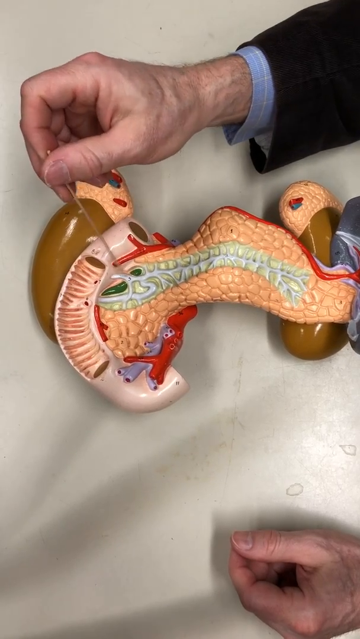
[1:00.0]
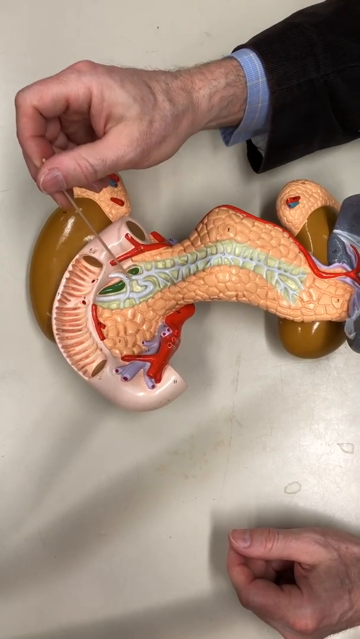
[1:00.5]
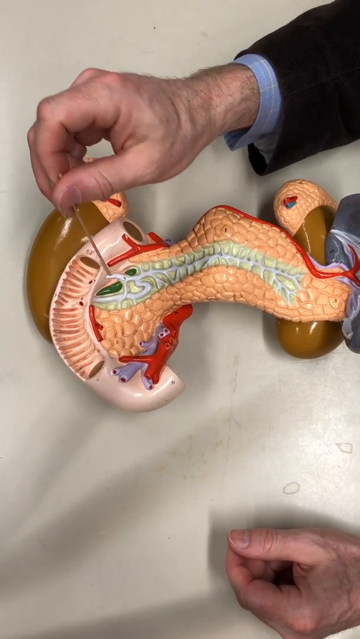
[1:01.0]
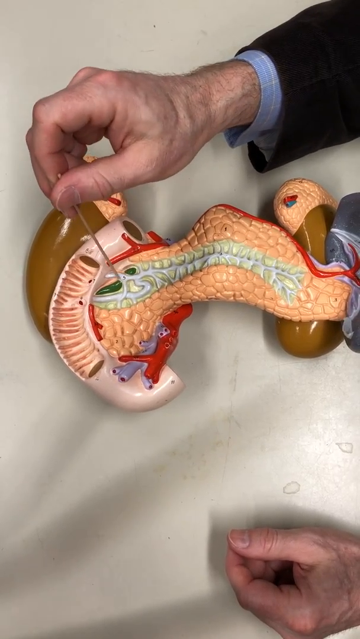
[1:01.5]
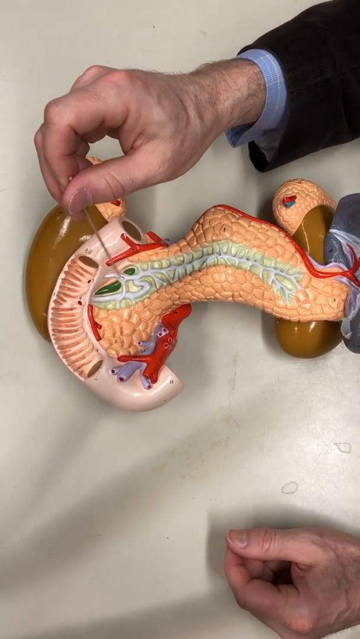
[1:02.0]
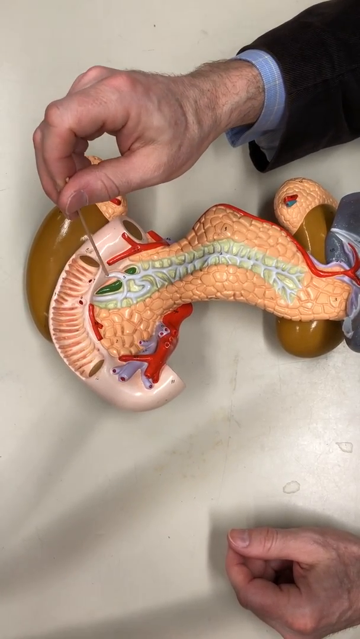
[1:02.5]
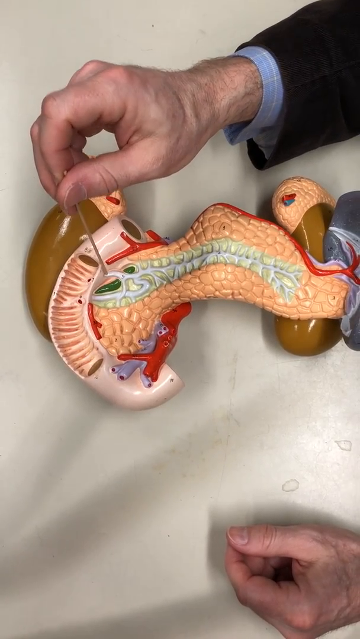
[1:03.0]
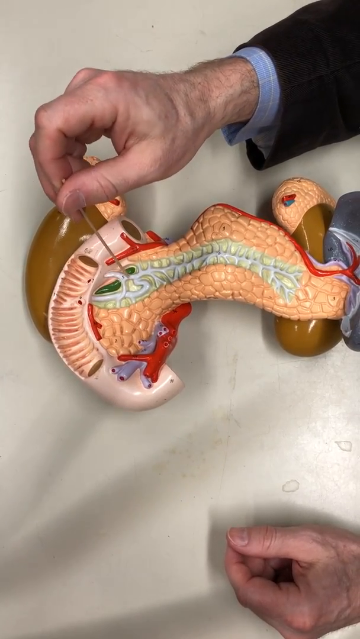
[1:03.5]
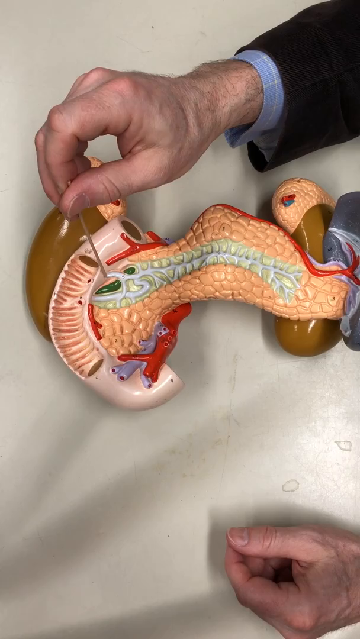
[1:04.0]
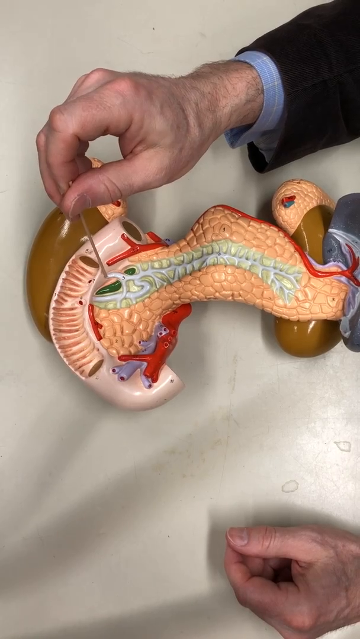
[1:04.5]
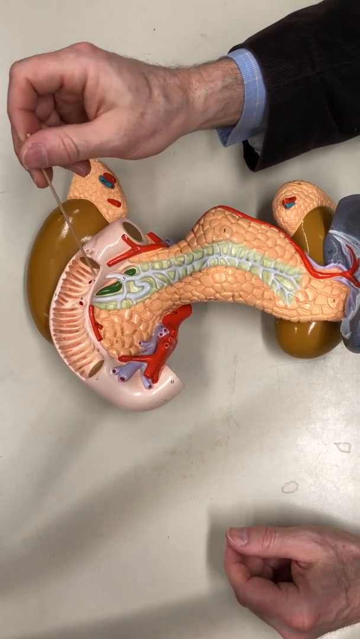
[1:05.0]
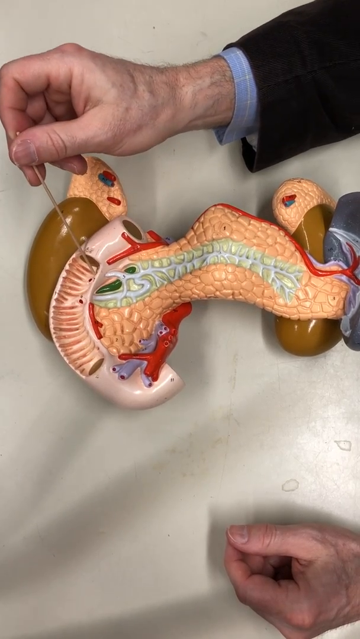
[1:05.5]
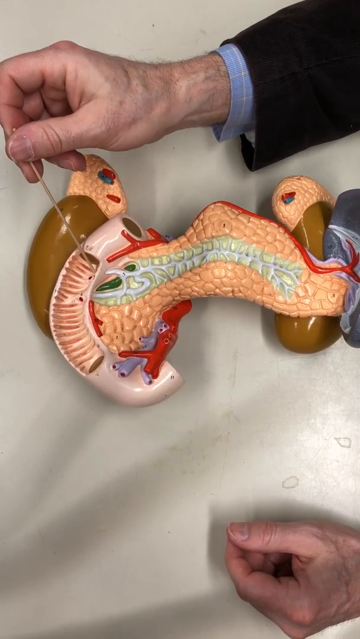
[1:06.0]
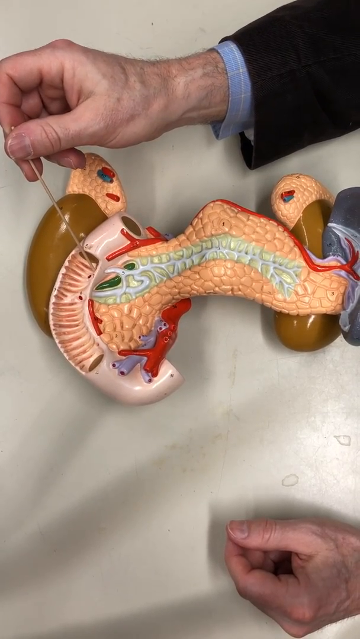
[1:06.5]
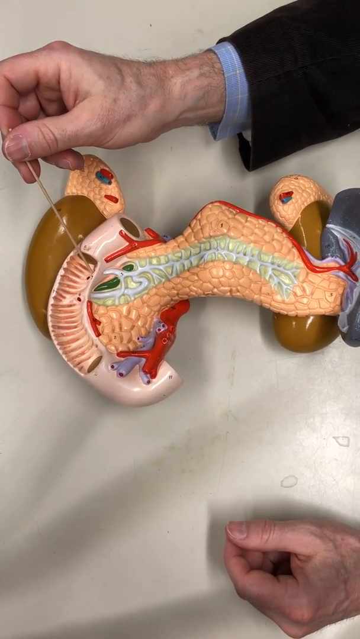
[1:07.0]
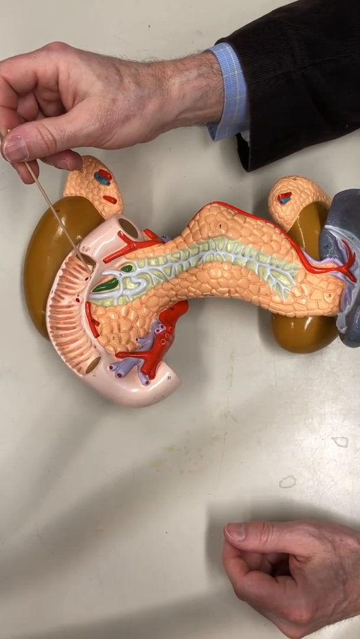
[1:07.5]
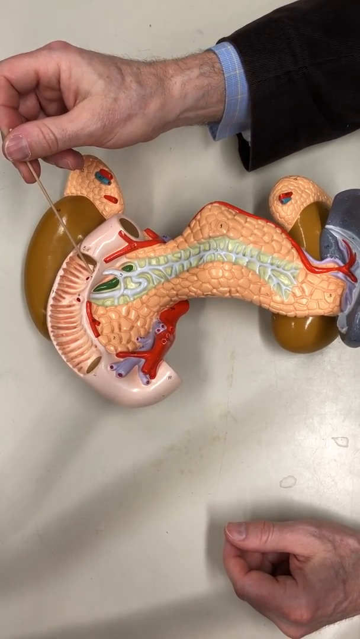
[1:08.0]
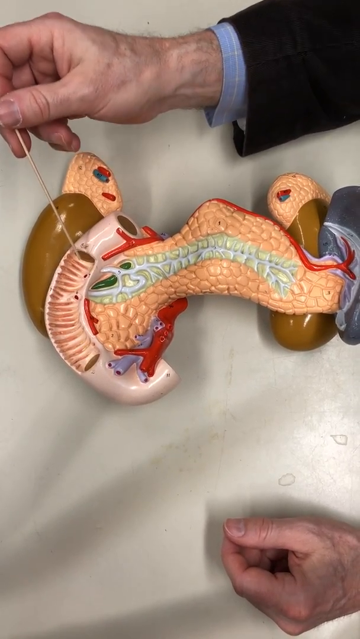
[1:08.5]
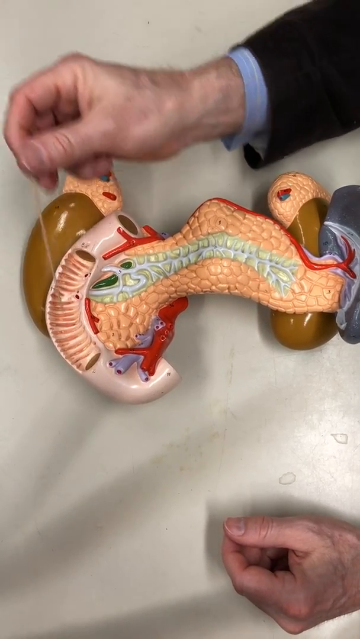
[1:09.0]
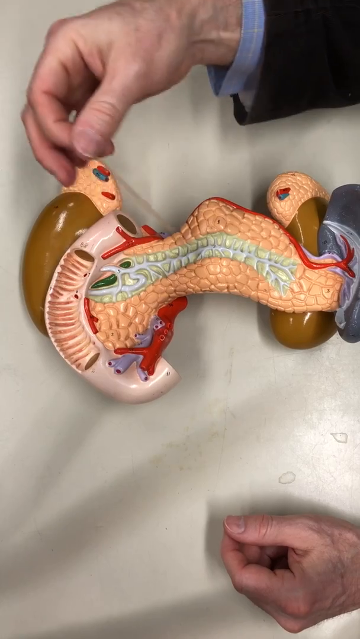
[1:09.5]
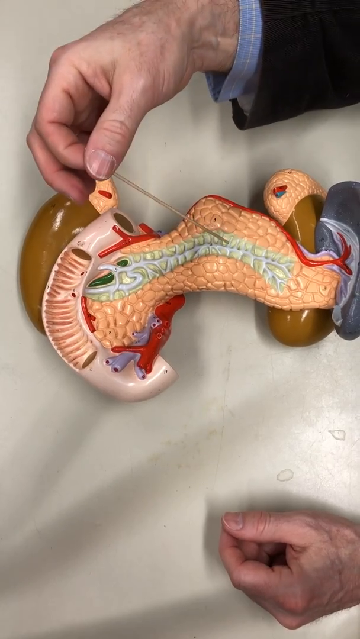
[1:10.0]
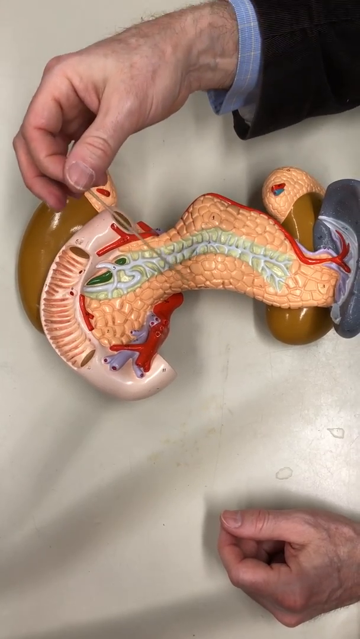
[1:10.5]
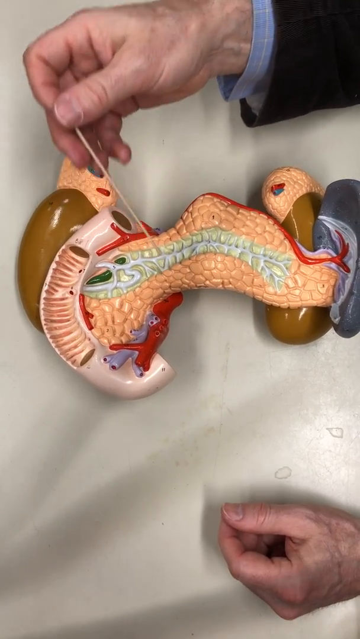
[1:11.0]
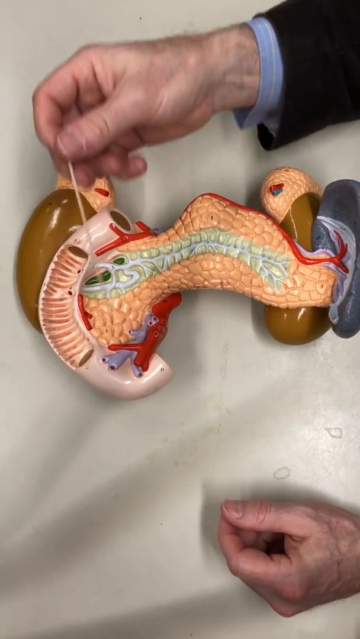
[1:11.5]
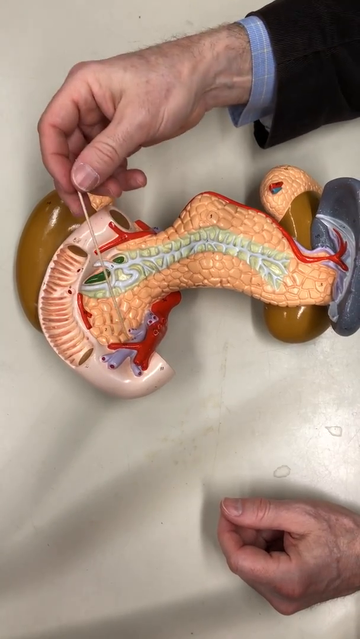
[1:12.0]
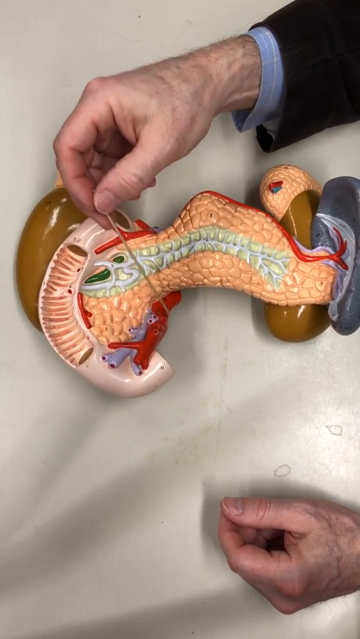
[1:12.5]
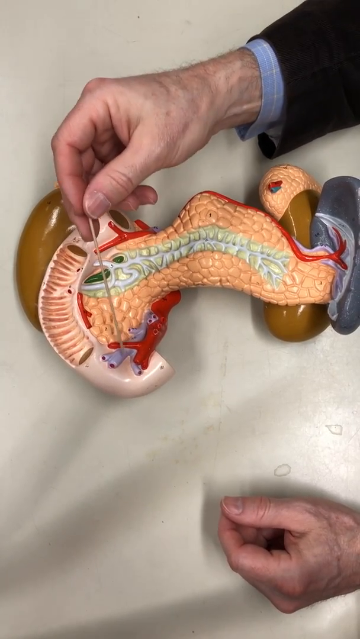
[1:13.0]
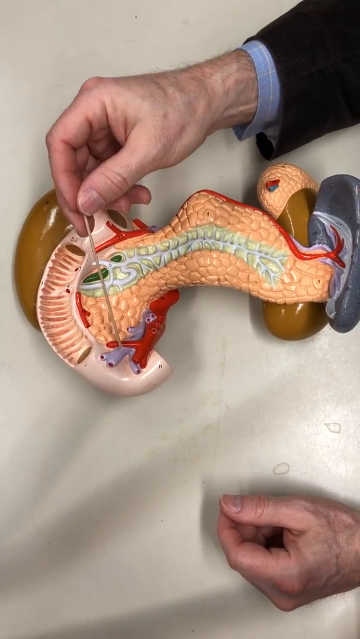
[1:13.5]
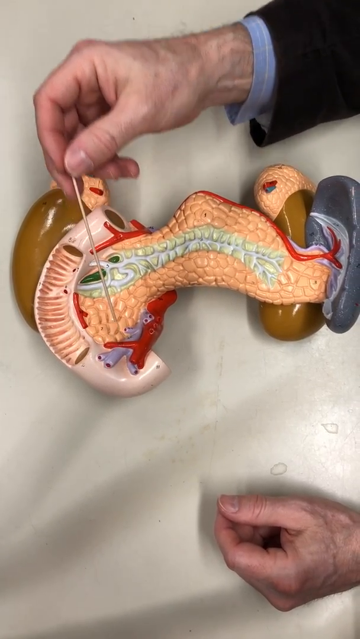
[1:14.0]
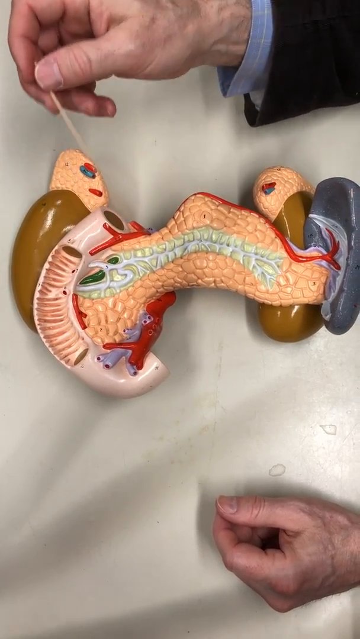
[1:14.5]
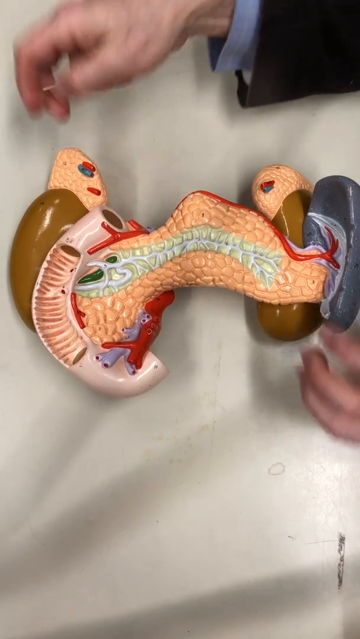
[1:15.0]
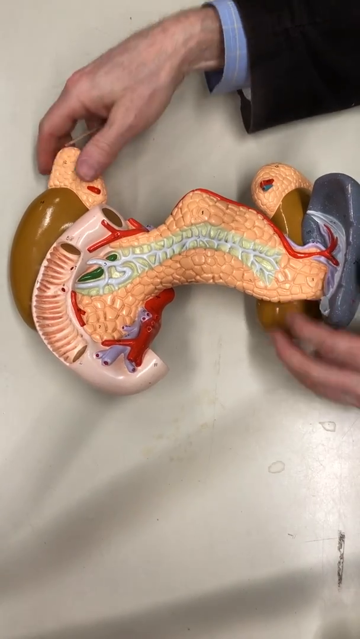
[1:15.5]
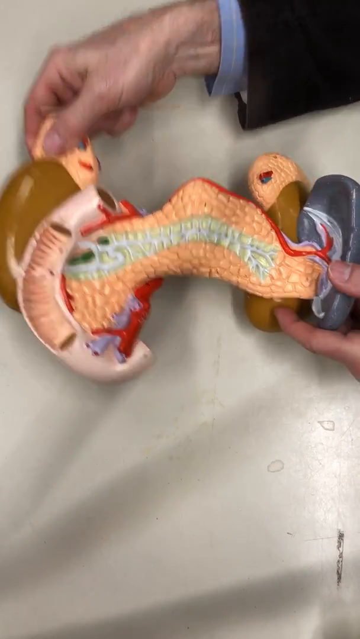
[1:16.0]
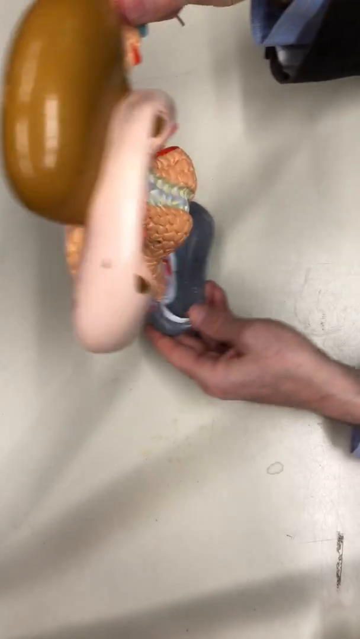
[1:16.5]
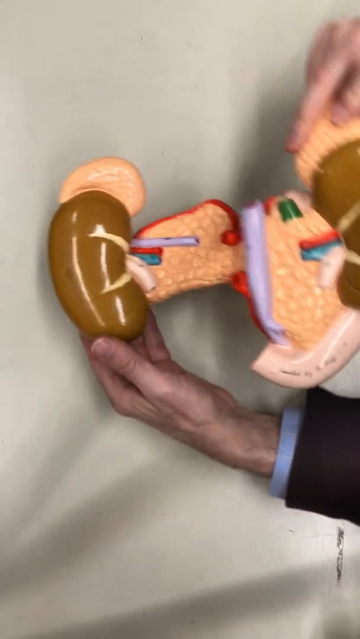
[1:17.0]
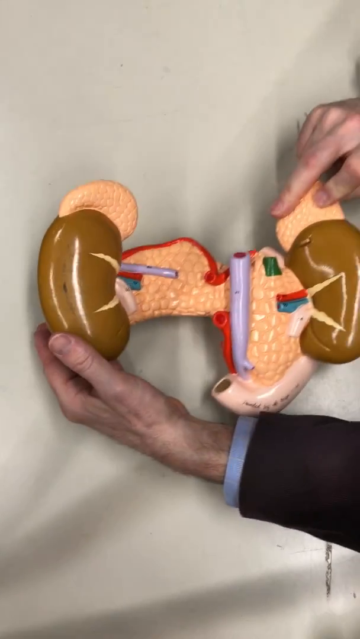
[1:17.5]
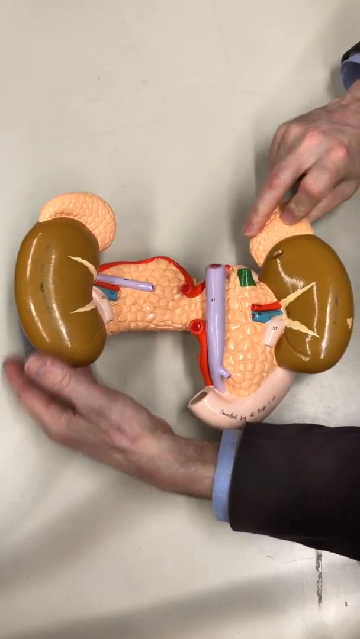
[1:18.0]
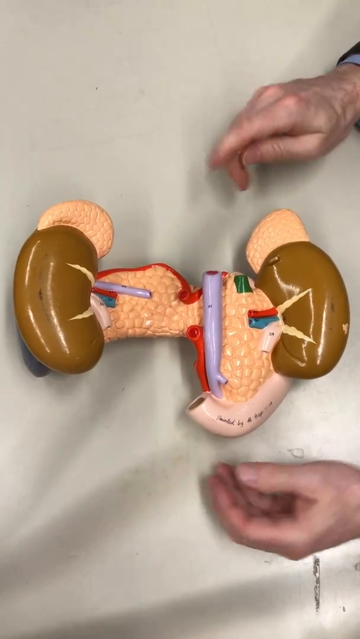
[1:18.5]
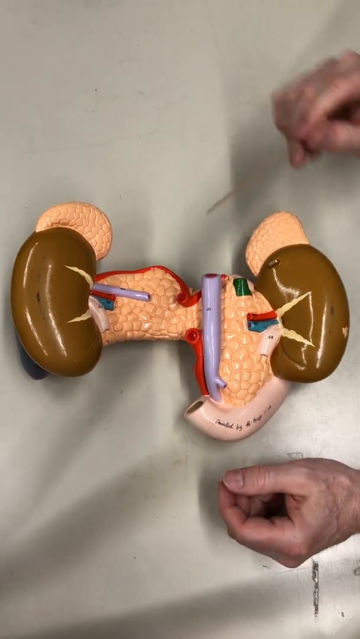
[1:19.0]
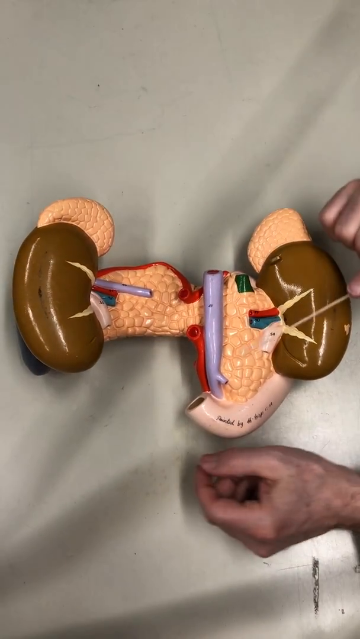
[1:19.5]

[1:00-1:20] The man points at a long line in the graph for a long time, then at a small grayish valve. He turns the object around to show a purple valve and how far it extends in the heart. He picks it up and also points at some greenish pores of unclear purpose. When it is turned around, the valve still looks linear. No faces are visible; only hands show that a person is present.